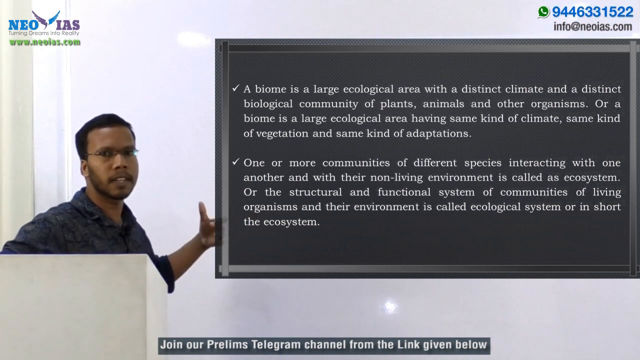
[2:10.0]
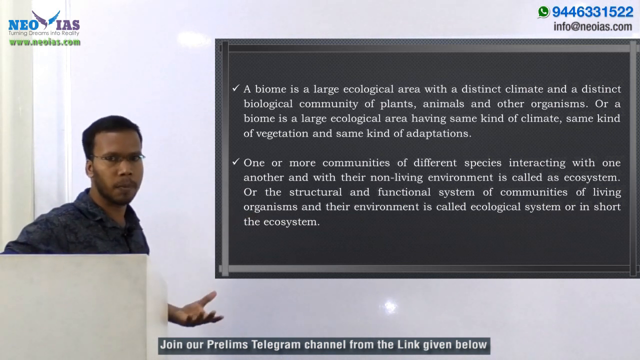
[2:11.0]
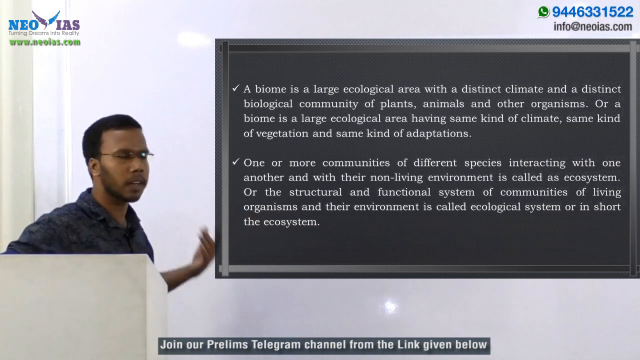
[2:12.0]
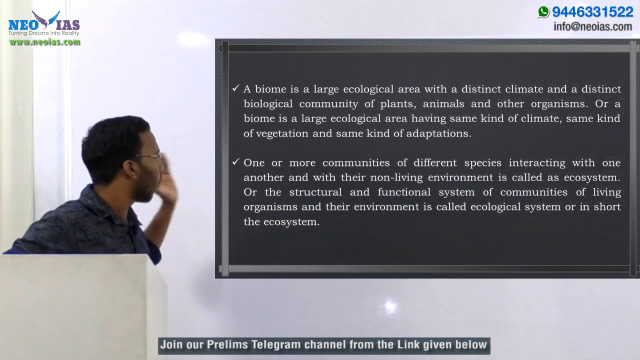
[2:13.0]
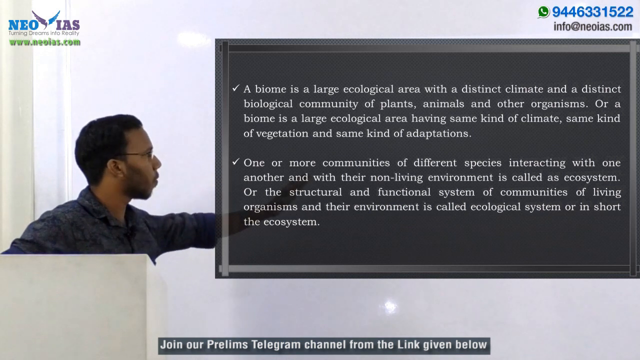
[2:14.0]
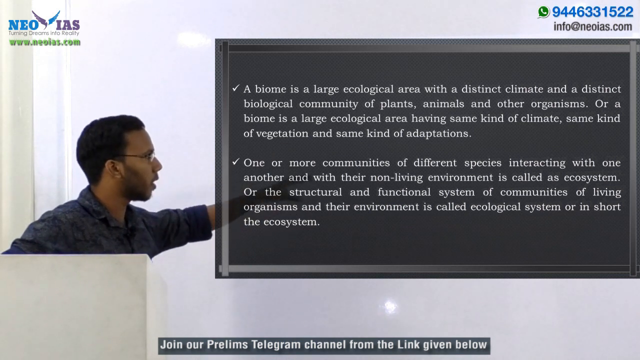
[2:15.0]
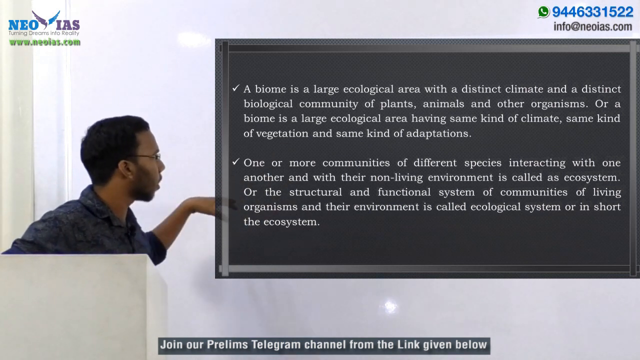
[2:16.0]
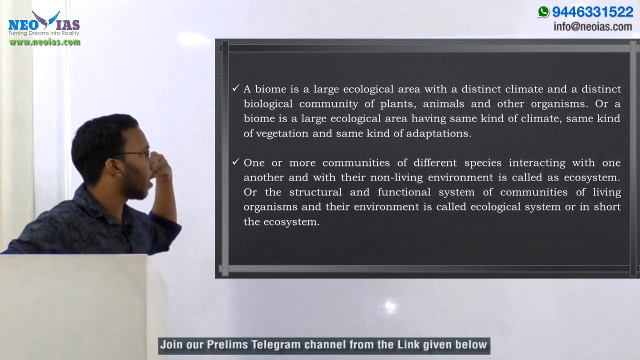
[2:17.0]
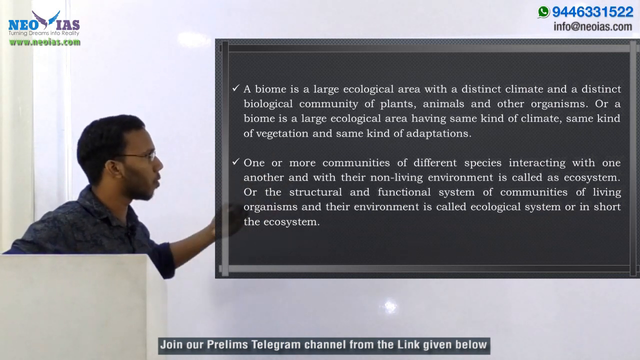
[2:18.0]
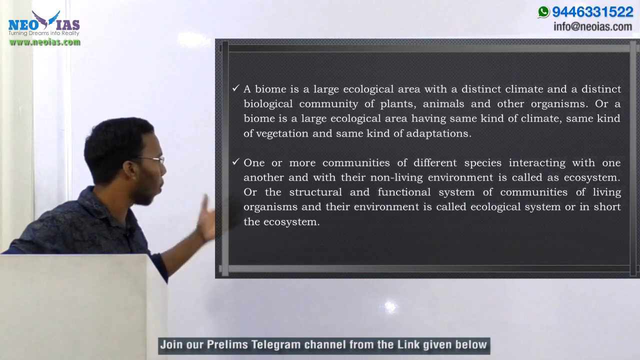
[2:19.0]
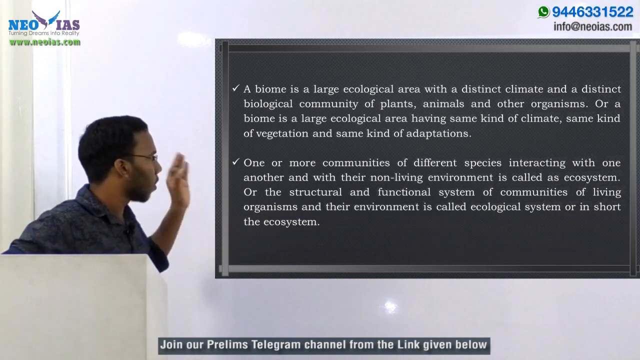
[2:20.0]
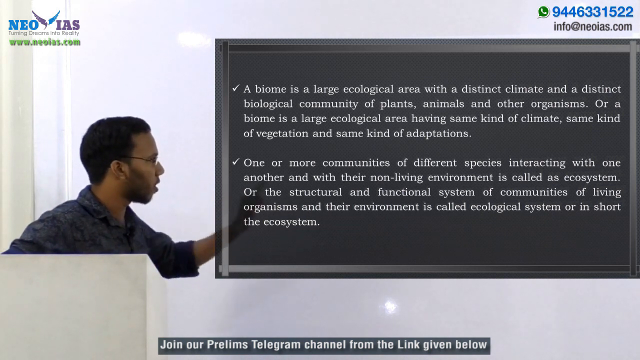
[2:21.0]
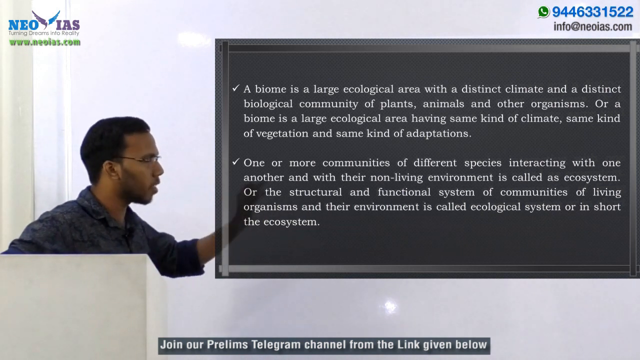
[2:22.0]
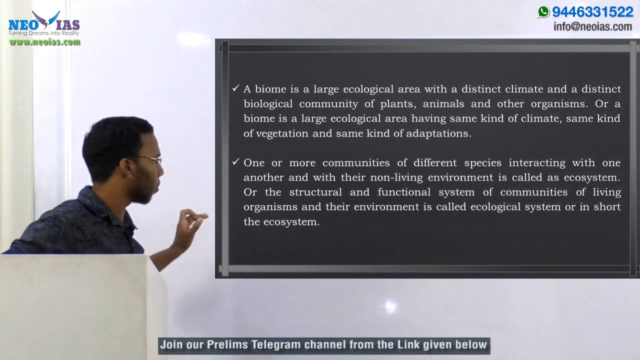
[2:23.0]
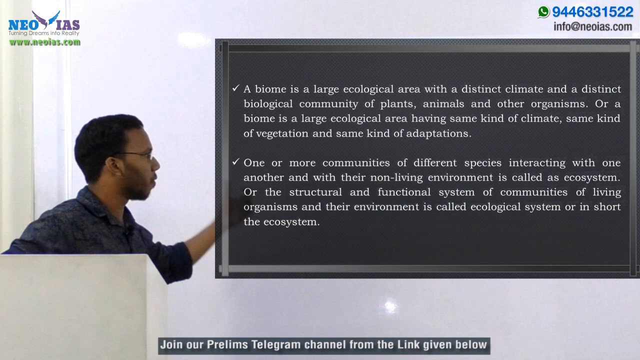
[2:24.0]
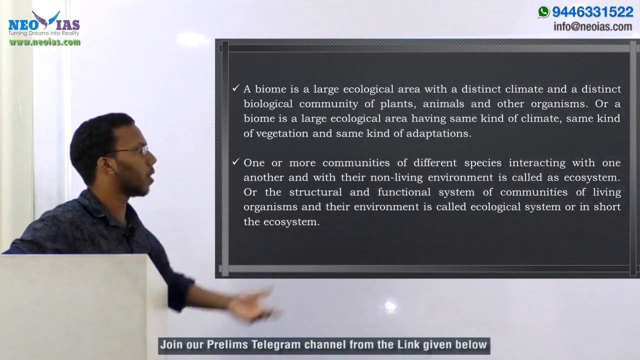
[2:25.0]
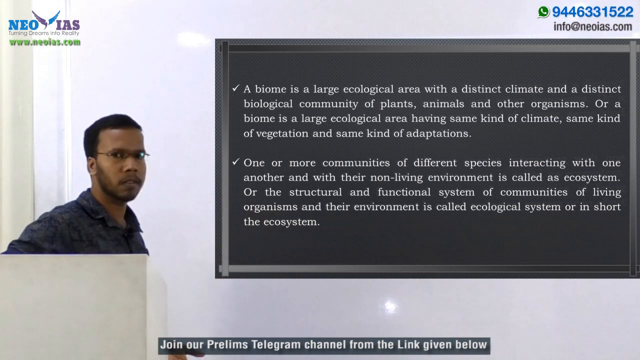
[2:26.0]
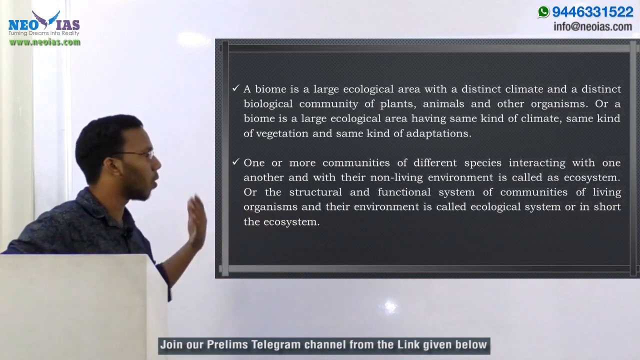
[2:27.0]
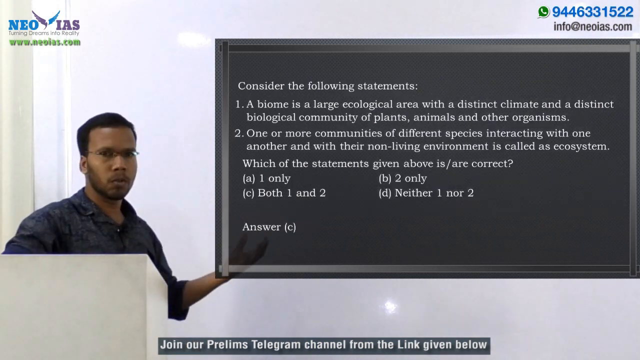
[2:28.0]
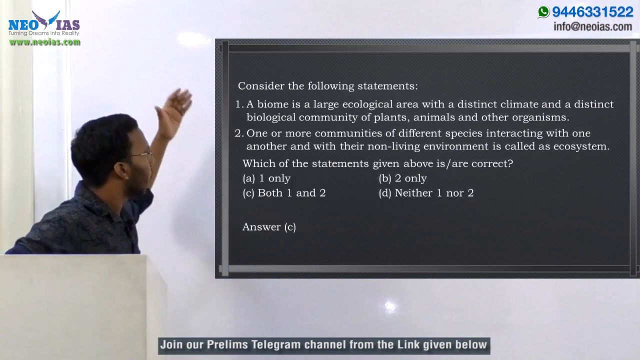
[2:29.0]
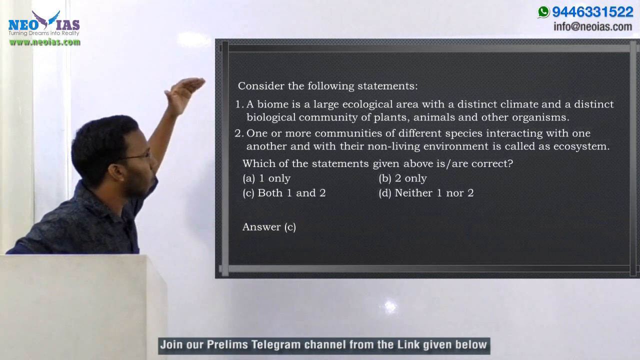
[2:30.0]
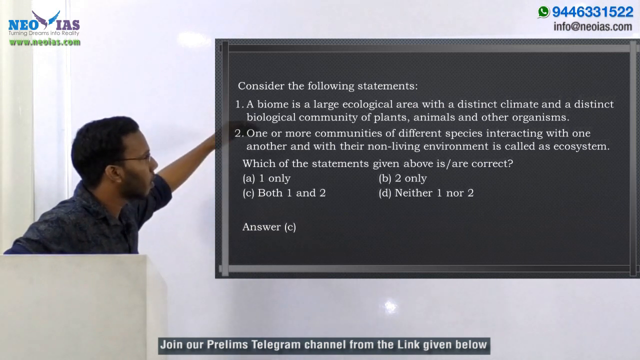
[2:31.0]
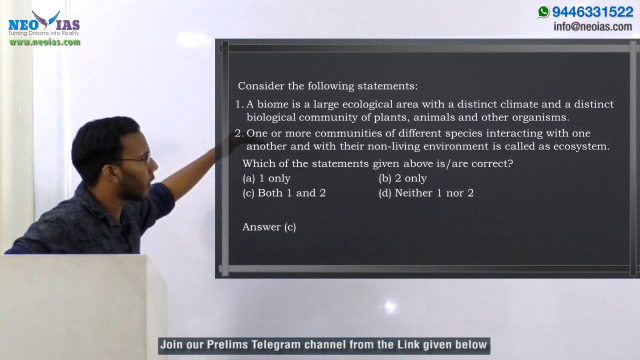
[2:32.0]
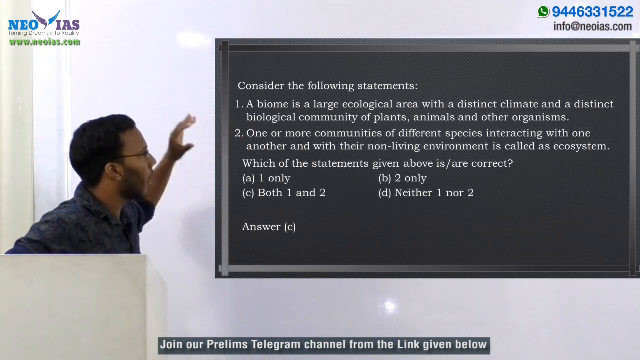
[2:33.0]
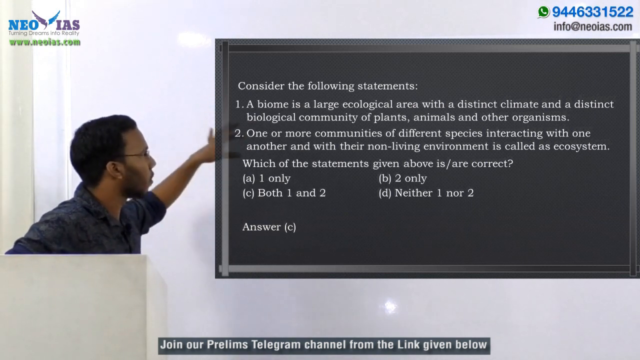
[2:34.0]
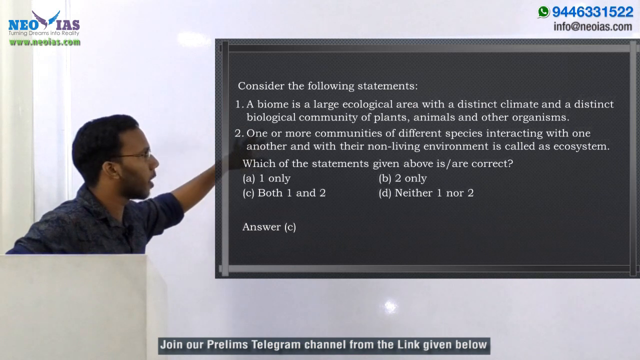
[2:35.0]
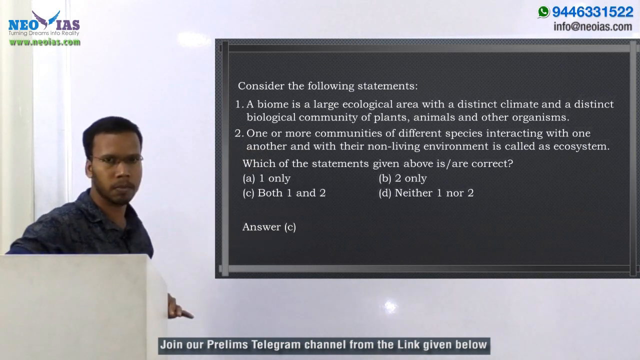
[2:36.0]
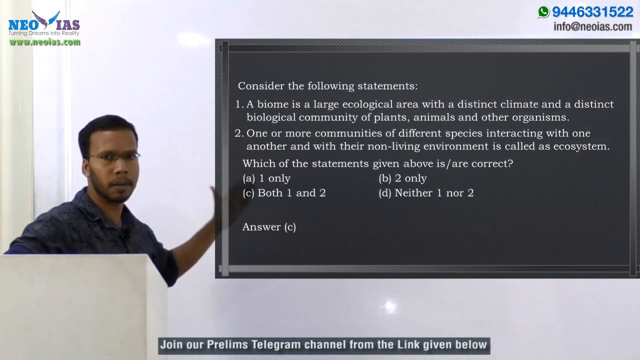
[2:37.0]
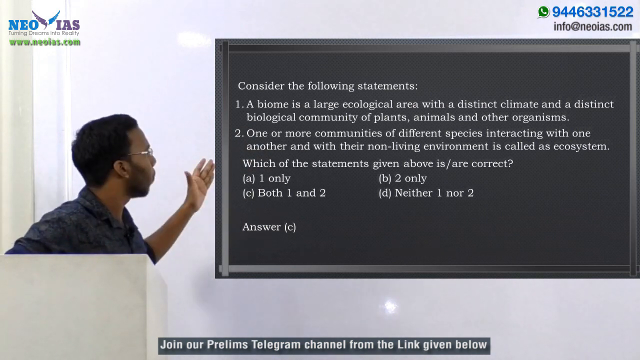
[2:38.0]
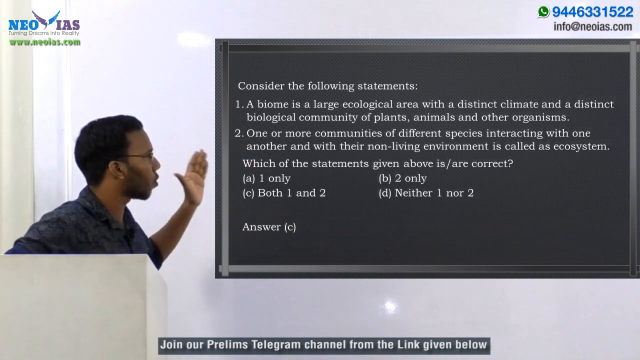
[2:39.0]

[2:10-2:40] The man turns left while moving his arm up, bent at about 45 degrees, with his palm out almost as if for a handout, then pulls it back and turns toward the camera. He makes a reiterating gesture, starting with his hand below his chin and moving it outward in an underhand motion. The video then moves to a different slide, going back and forth between the question, which begins "considering the following statements," and the other page with the definition of a biome, seemingly to give the students clues and make them think before he explains. He puts his hand over the question, then spreads his hands out toward the four options. The answer is then shown as C, meaning both one and two.